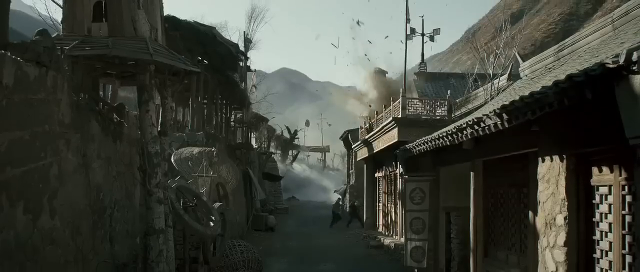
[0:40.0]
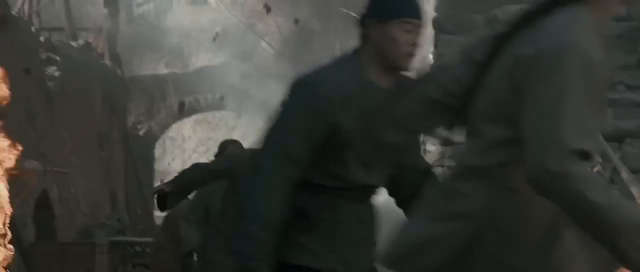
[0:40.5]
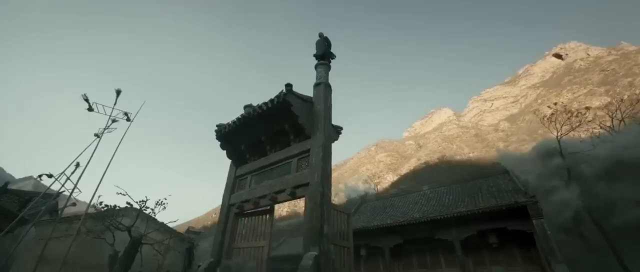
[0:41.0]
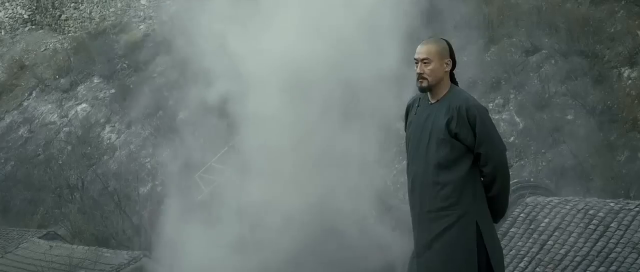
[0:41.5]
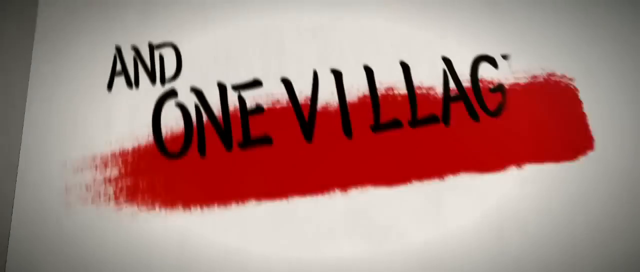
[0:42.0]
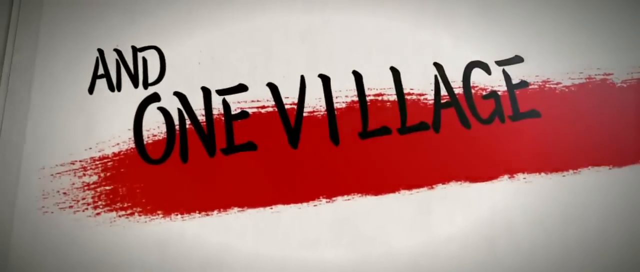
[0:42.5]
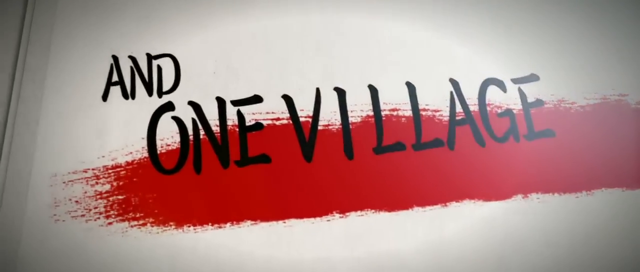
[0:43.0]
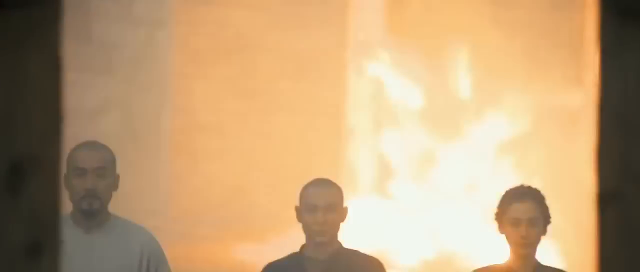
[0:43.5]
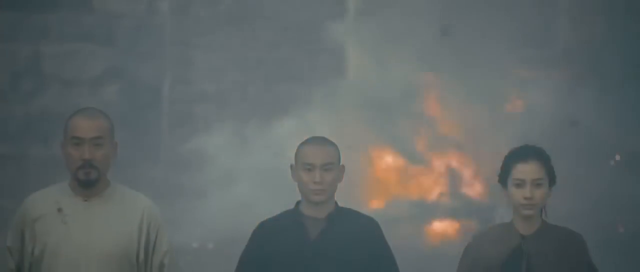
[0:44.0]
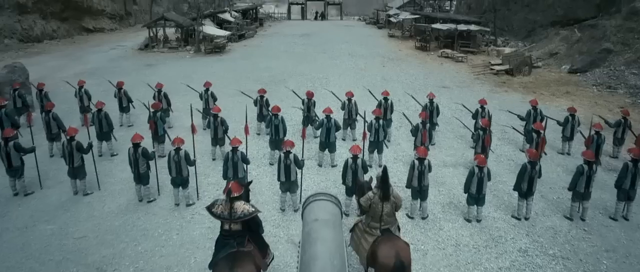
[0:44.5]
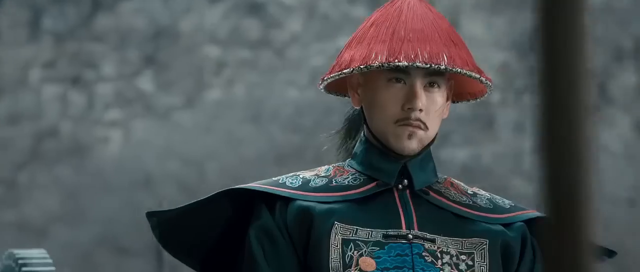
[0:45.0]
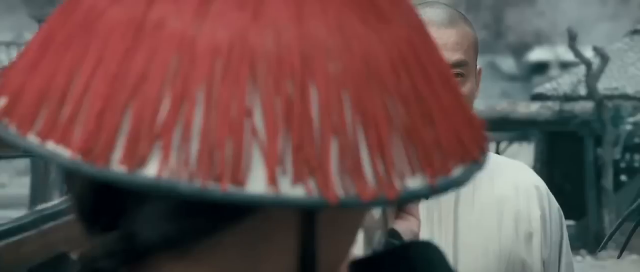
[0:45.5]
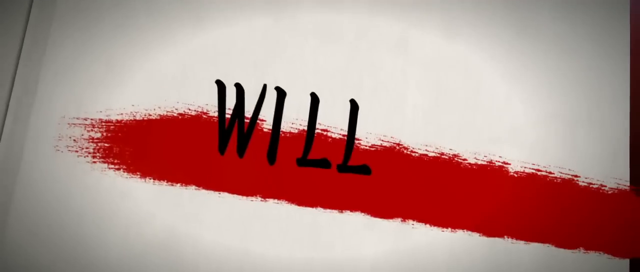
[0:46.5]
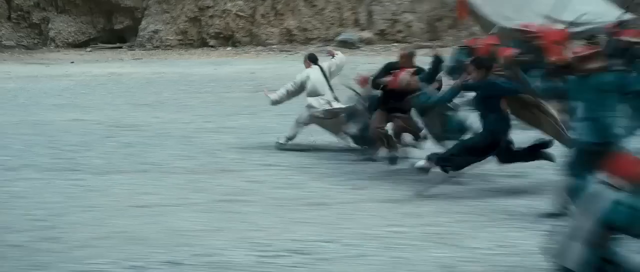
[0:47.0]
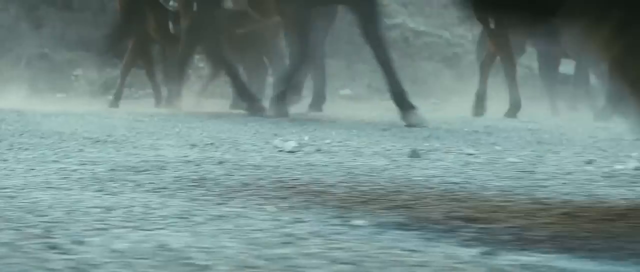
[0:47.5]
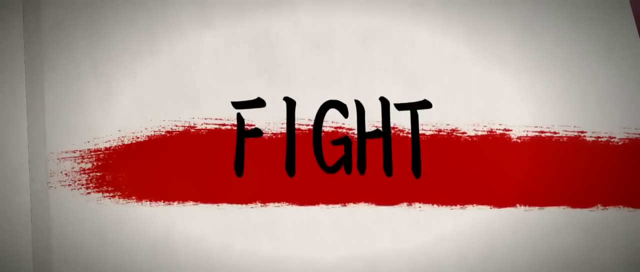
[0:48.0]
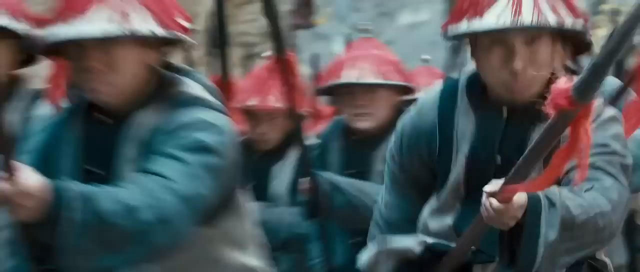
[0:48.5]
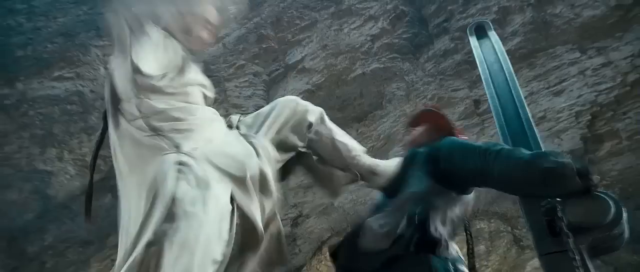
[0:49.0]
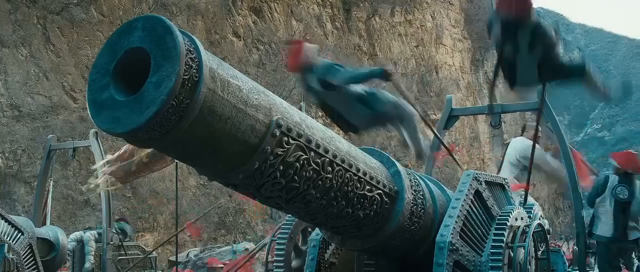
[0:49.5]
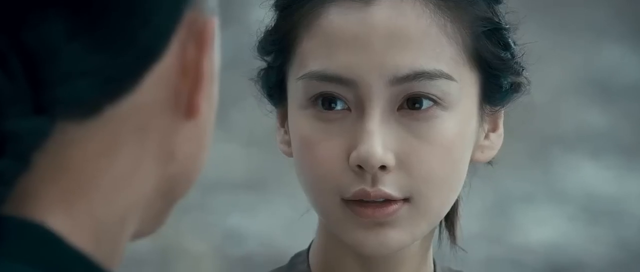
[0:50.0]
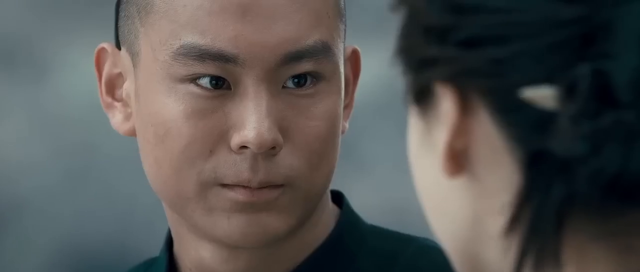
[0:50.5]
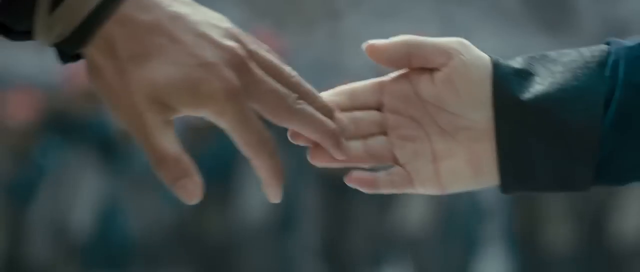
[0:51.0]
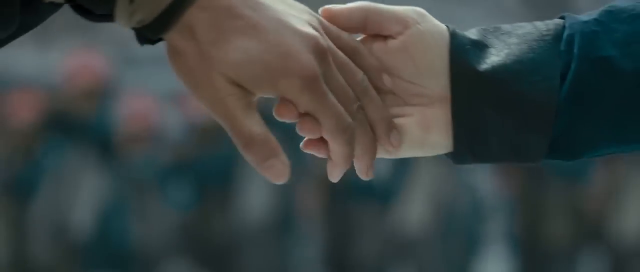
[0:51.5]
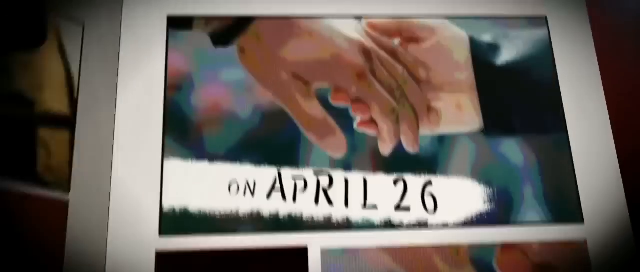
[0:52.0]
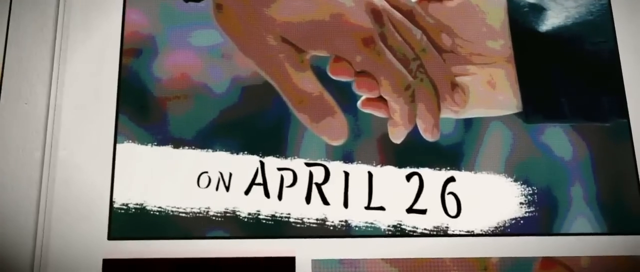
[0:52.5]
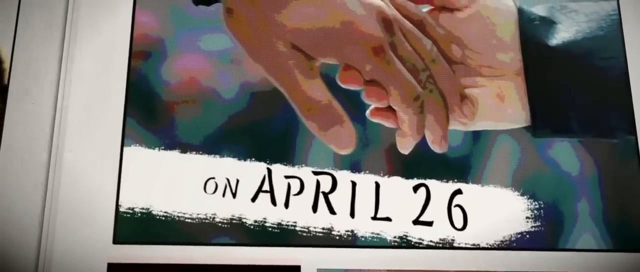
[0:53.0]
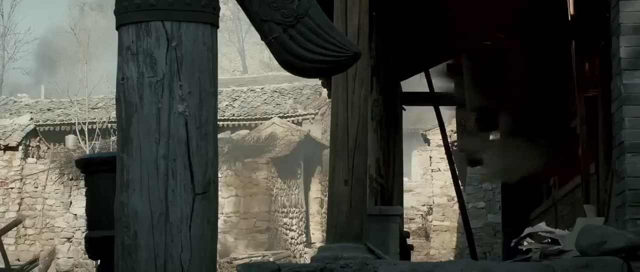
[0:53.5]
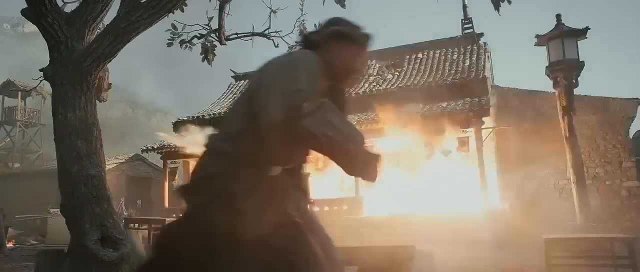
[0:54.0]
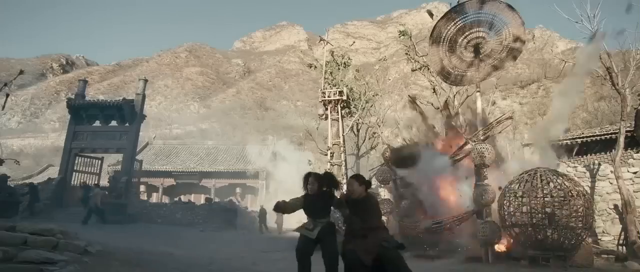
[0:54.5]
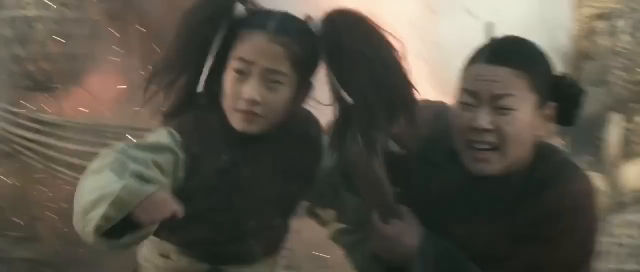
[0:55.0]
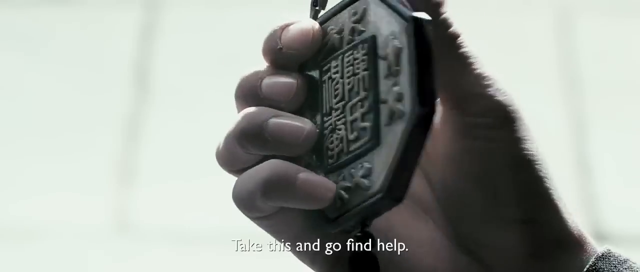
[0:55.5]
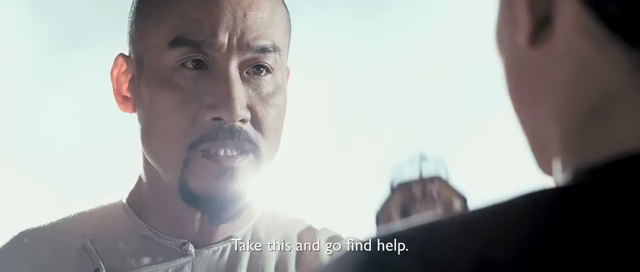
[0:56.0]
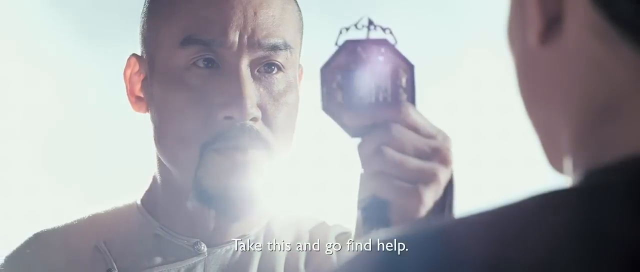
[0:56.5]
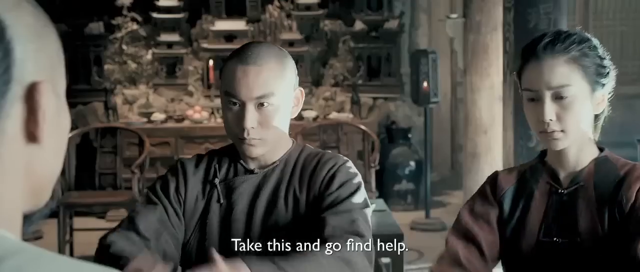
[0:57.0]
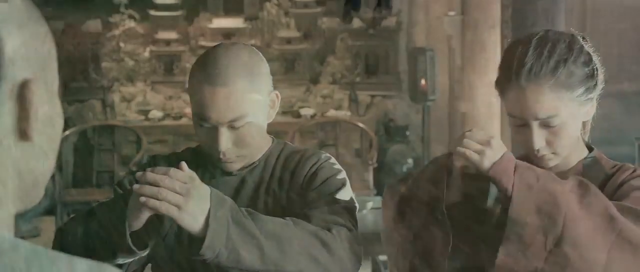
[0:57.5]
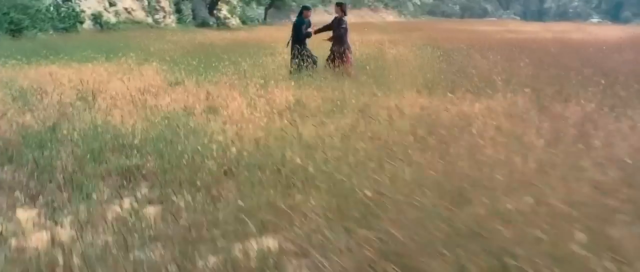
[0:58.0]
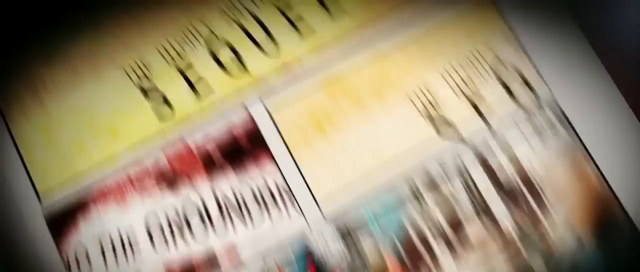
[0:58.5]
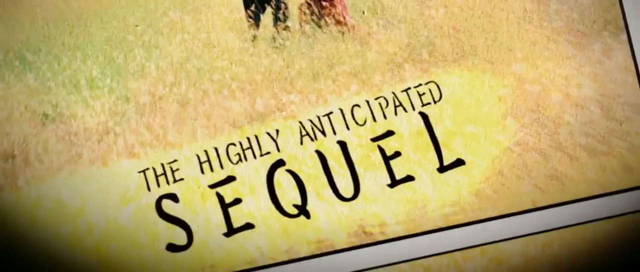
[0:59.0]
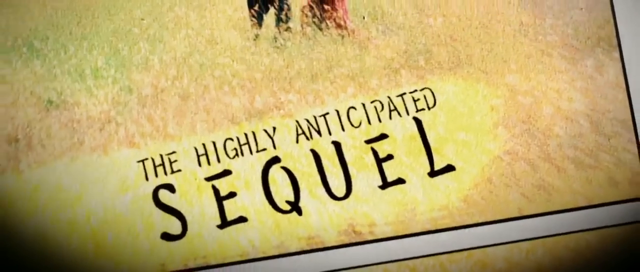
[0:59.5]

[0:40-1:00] Explosions go off as villages are attacked with cannons by a more advanced enemy, and homes are blown up. Someone, very likely the protagonist, is given some kind of medallion and is told to take it and go get help. A man and a woman who have been training together in martial arts, tai chi, seem to be trying to defend the village. A date of April 26 is given, very likely the movie's debut; the video indicates it is a sequel and that the village is going to fight back. Villagers run around scared amid many explosions, people fight using martial arts, and what seem to be soldiers stand lined up awaiting the beginning of a battle, wearing red hats and uniforms that indicate they belong to the same army.